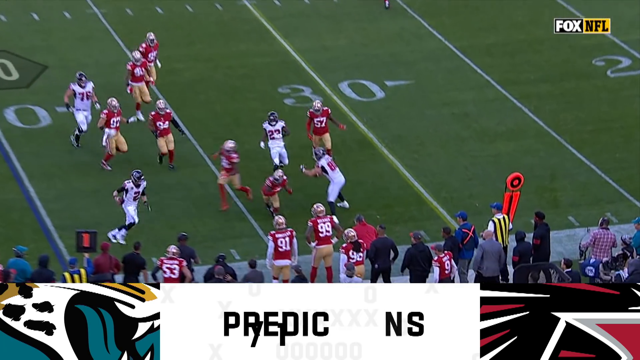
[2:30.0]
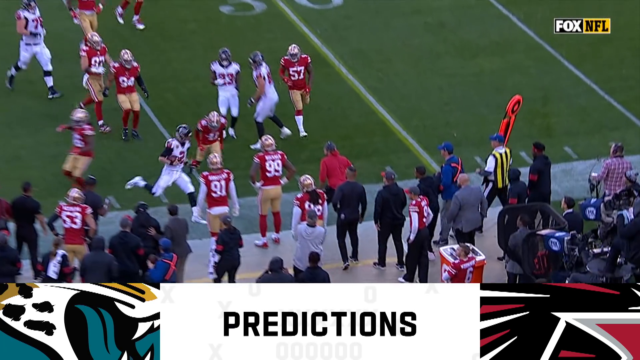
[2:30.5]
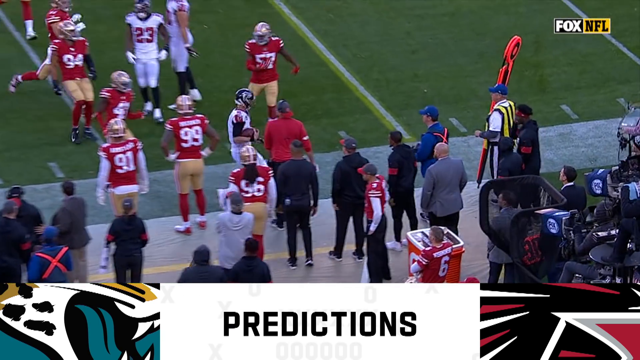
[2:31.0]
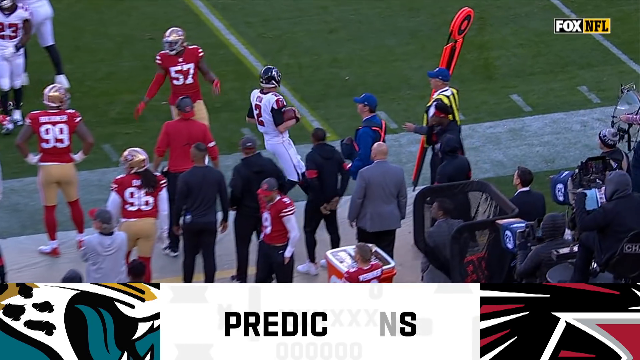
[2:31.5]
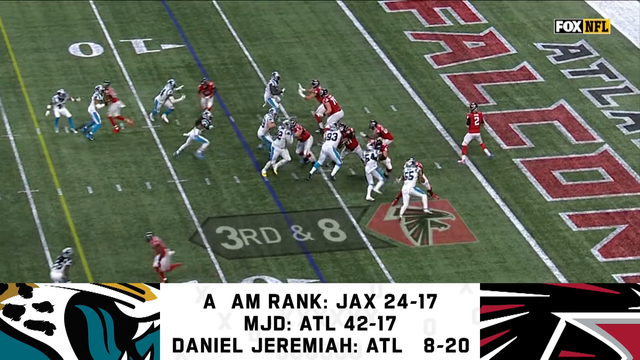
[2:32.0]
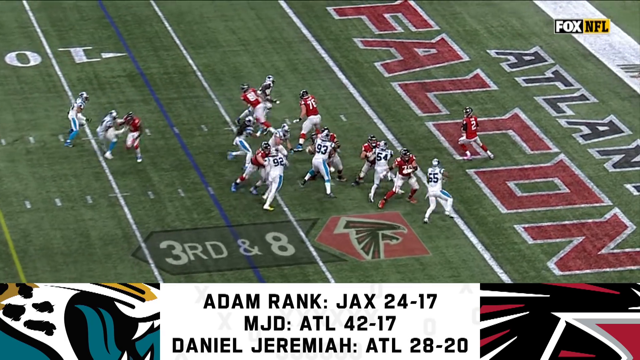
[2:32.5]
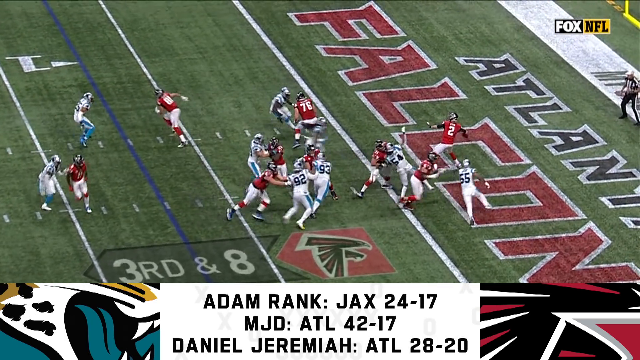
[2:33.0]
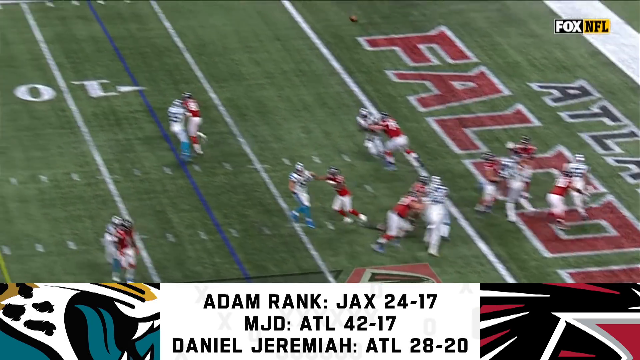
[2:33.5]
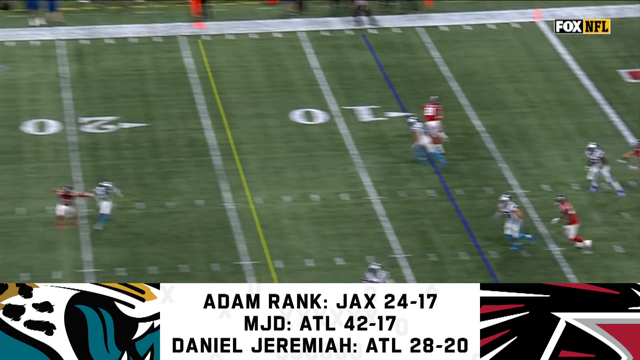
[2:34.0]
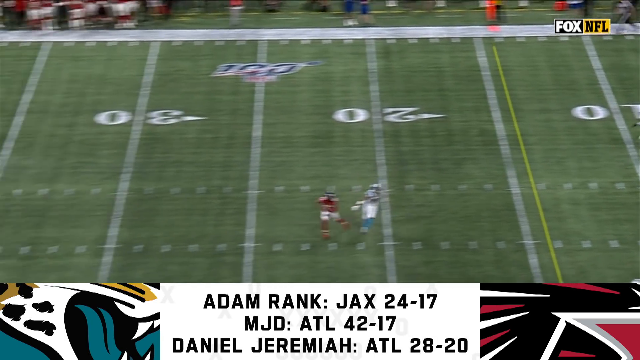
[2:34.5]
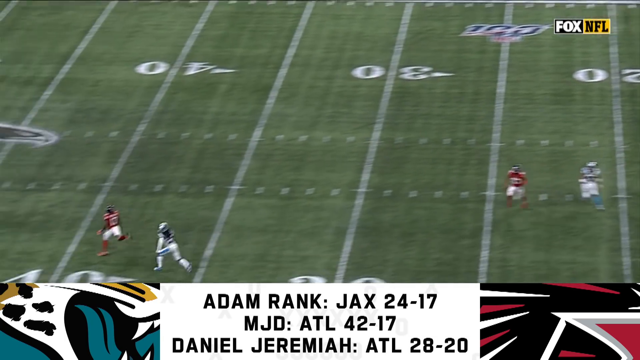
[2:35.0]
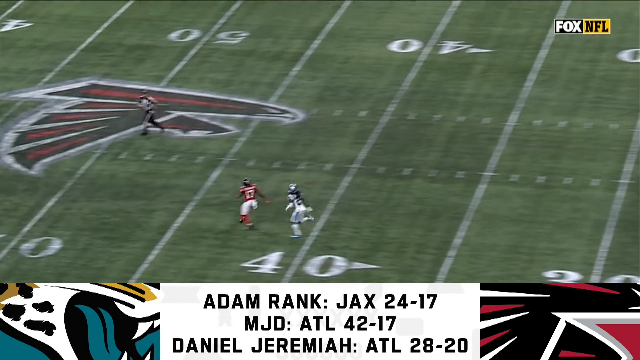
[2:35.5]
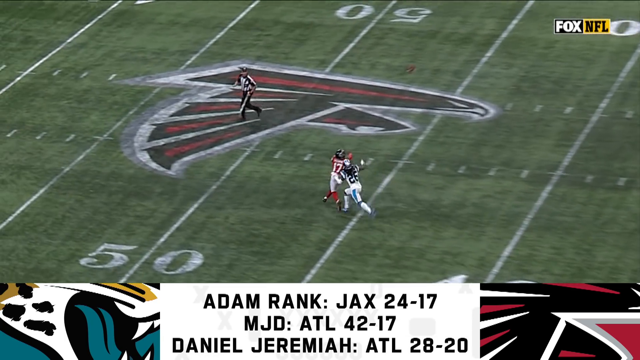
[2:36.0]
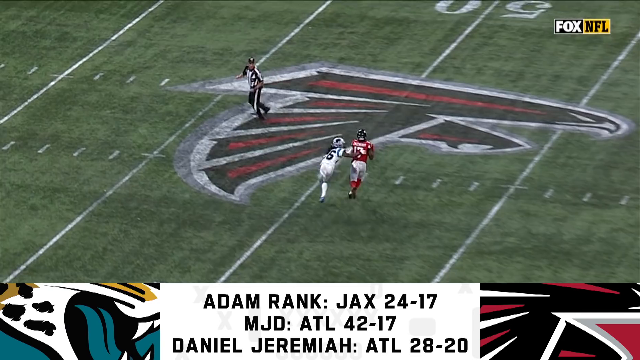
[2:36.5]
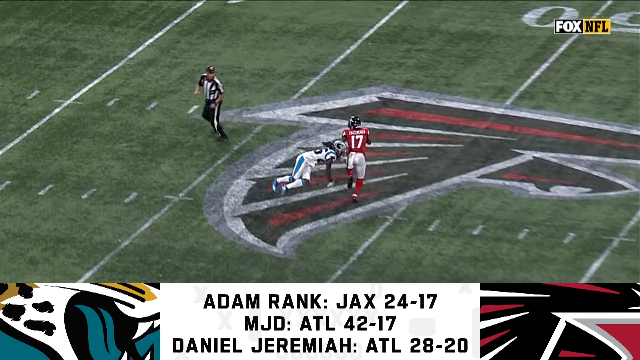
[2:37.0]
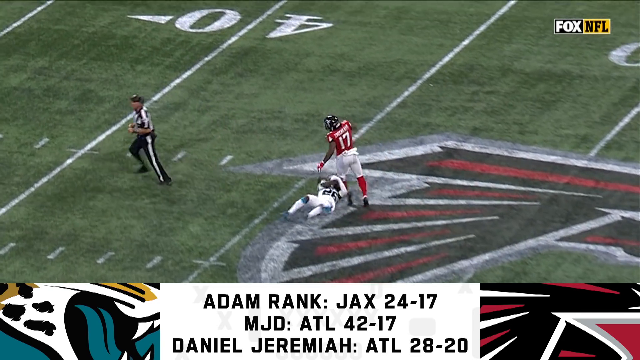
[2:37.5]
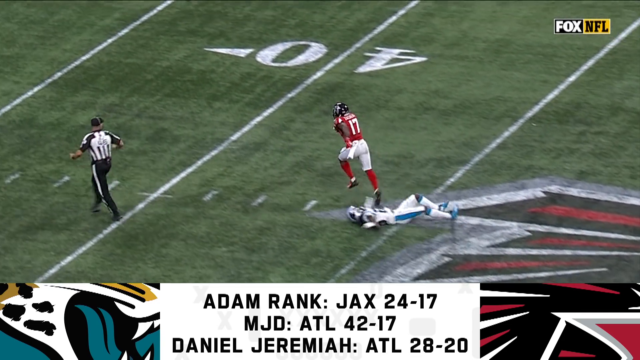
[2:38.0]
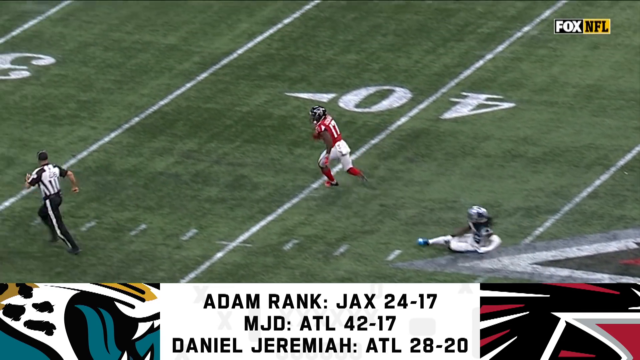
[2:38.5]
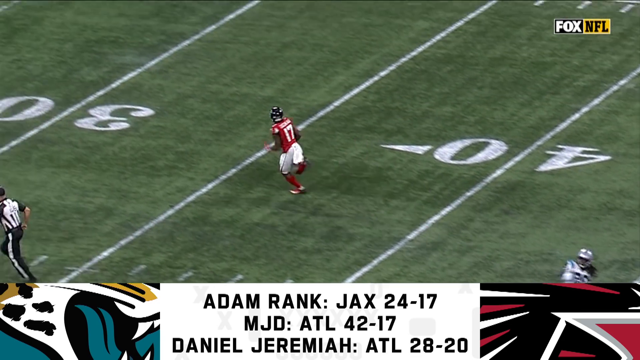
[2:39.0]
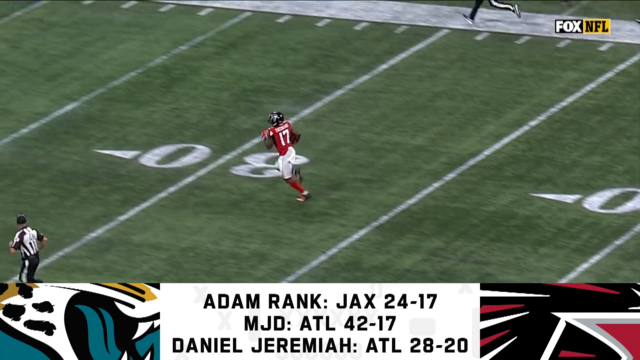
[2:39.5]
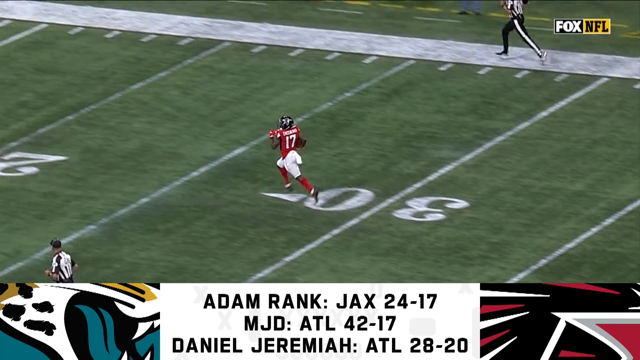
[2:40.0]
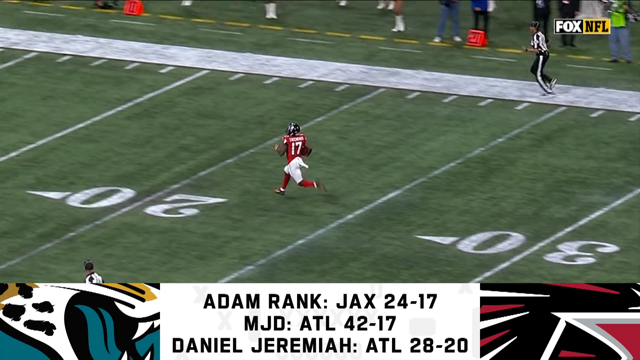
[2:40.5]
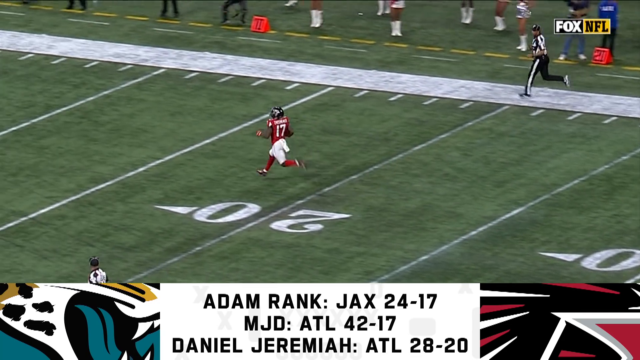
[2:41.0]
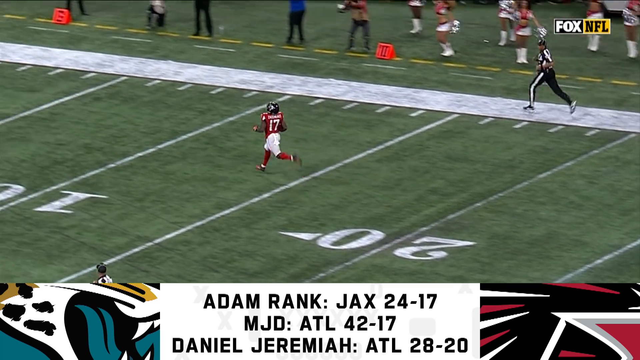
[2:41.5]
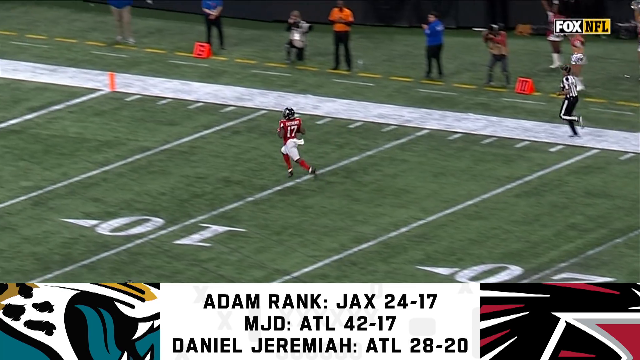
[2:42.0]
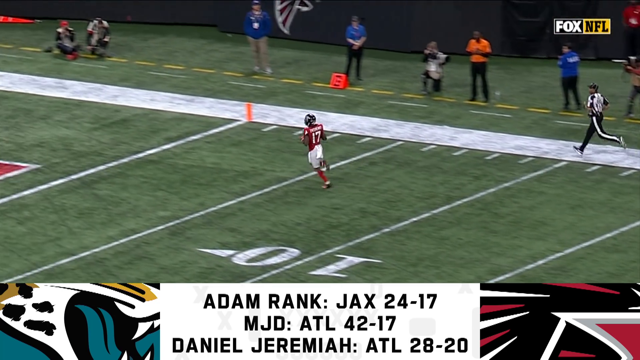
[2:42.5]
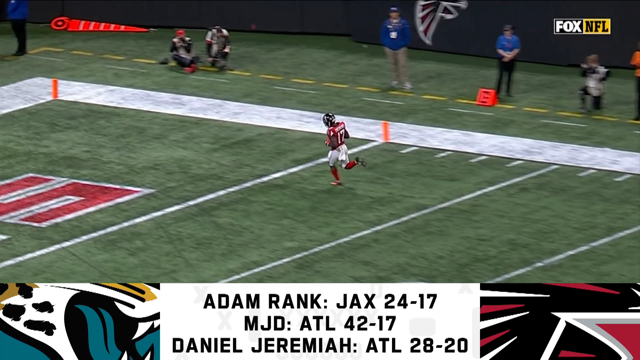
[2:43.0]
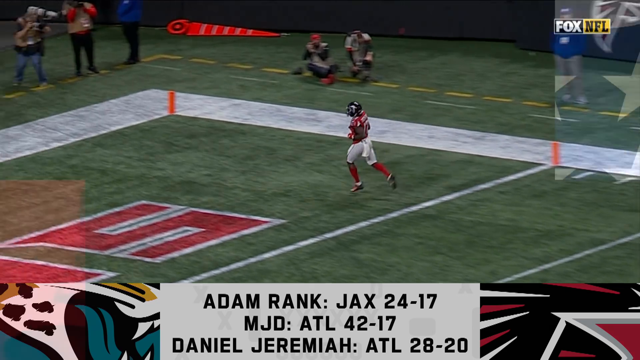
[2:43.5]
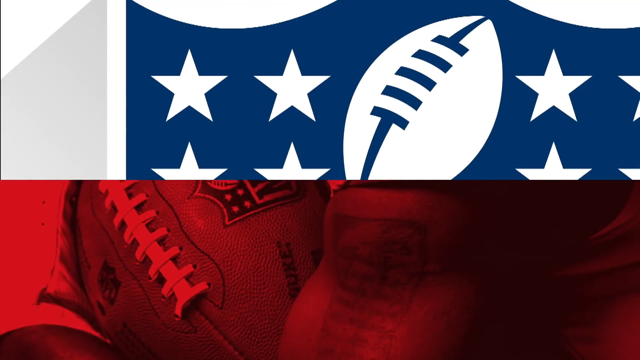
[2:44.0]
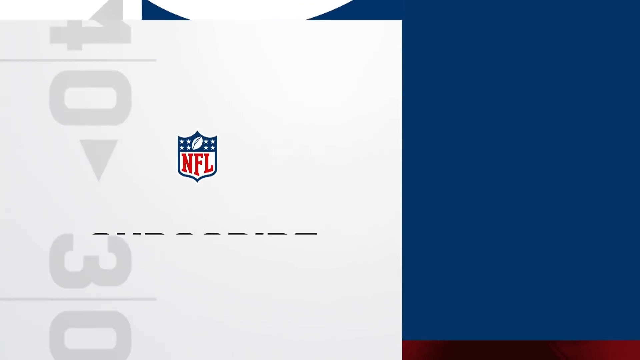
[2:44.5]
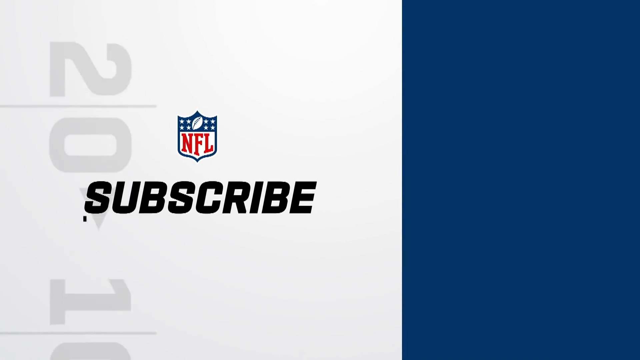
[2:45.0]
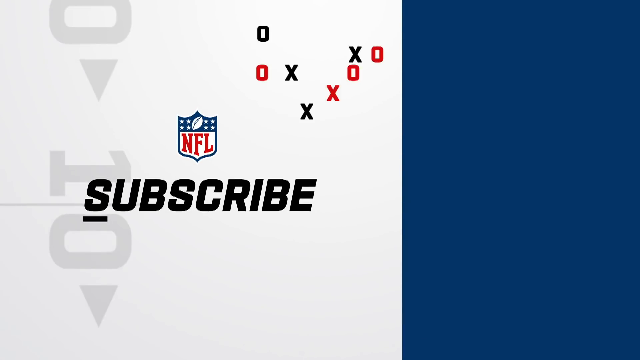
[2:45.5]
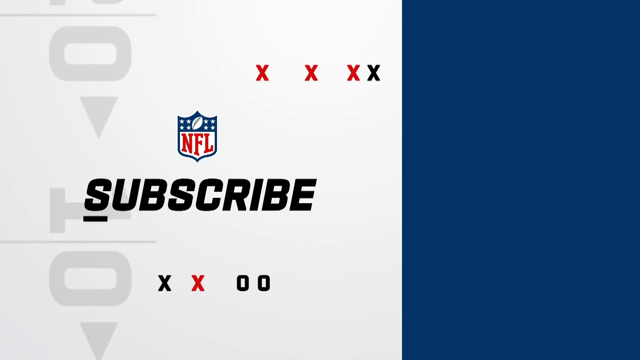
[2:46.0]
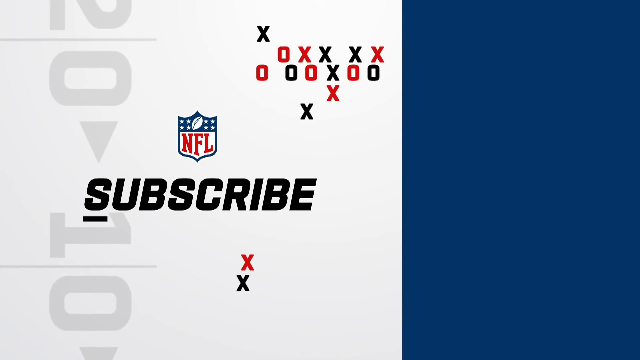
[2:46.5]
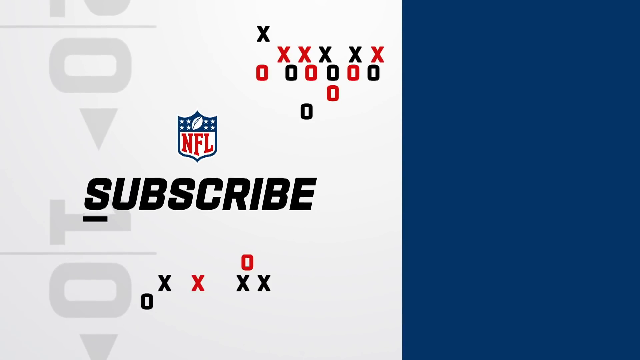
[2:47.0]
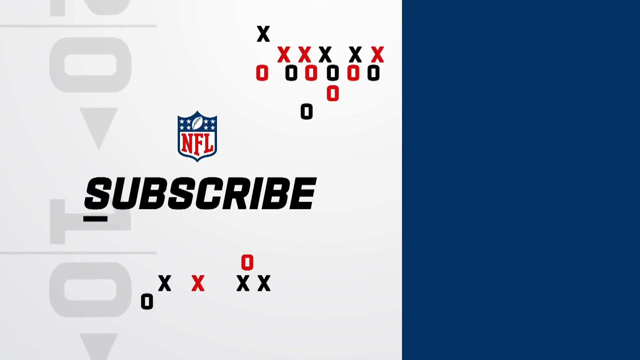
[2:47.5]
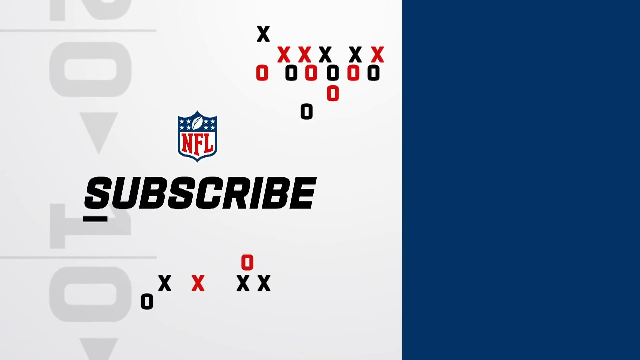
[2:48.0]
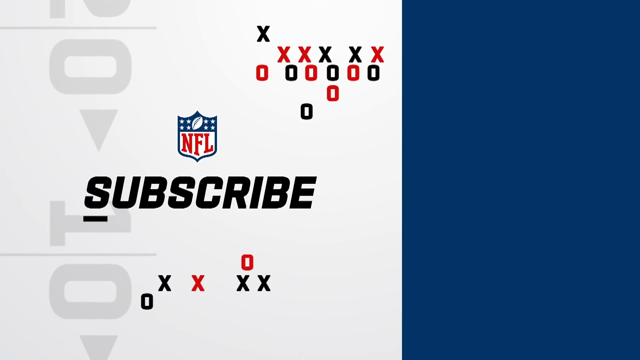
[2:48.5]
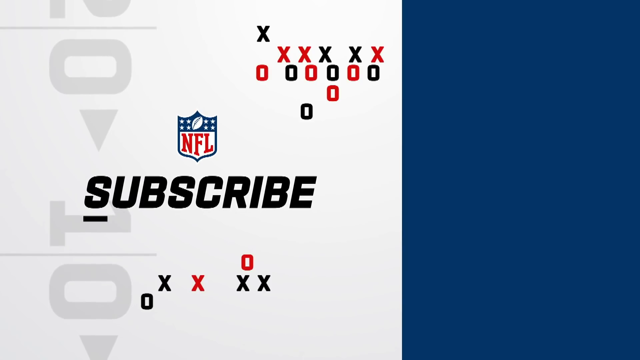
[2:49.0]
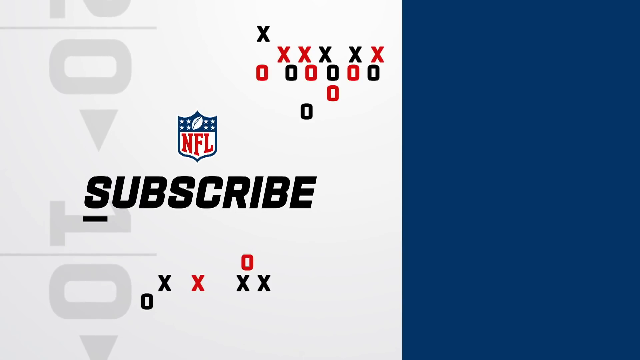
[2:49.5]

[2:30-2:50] A very long play goes downfield, with uniforms that appear different from earlier. It is an Atlanta Falcons play on third and eight from their own seven-yard line: the quarterback throws deep, his teammate catches it close to the halfway line, the tackler misses him, and he strolls in for a 93-yard touchdown. The video ends with an invitation to subscribe to the NFL, which includes Xs and Os like those football coaches use on their play charts.